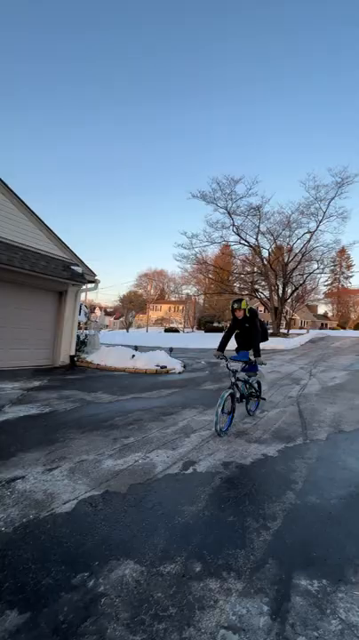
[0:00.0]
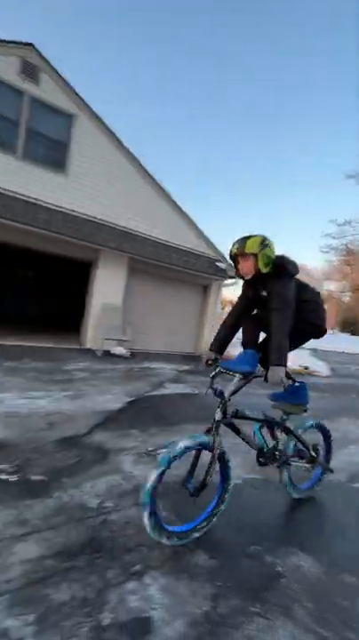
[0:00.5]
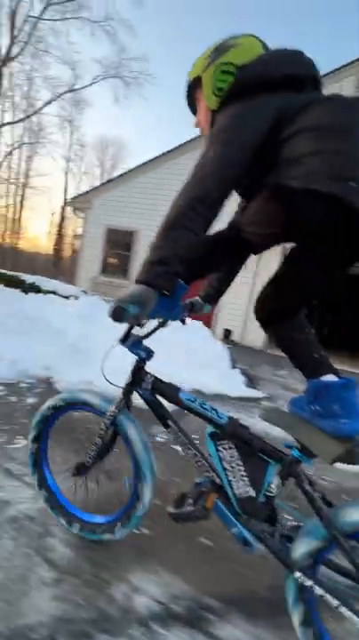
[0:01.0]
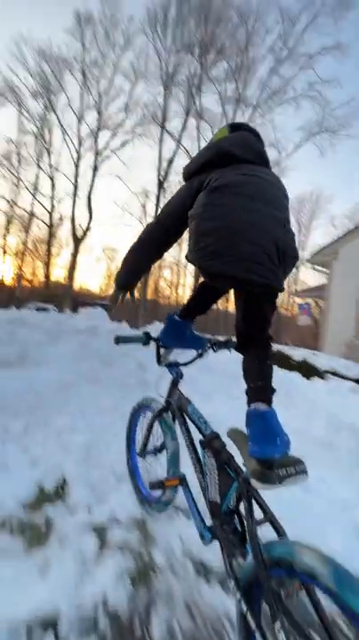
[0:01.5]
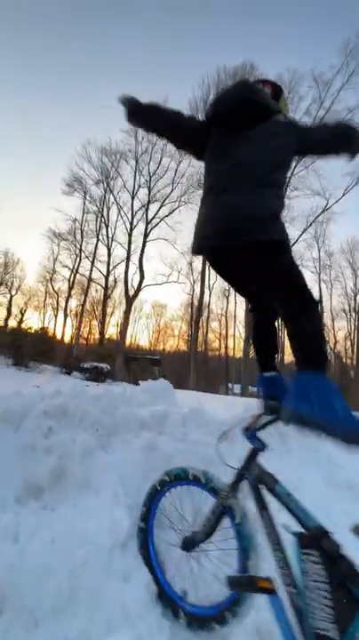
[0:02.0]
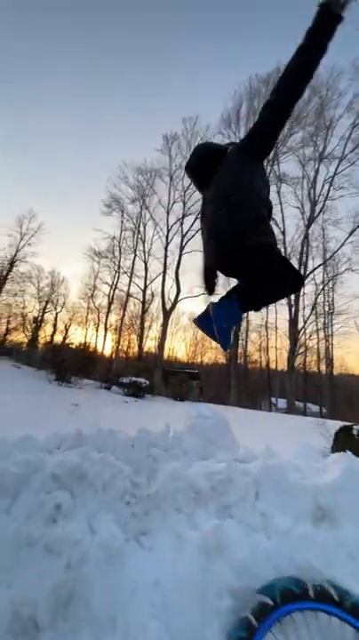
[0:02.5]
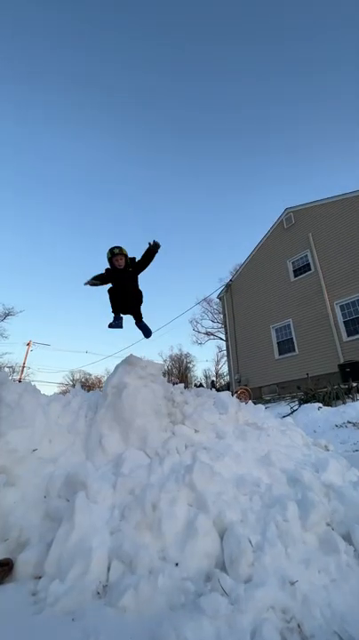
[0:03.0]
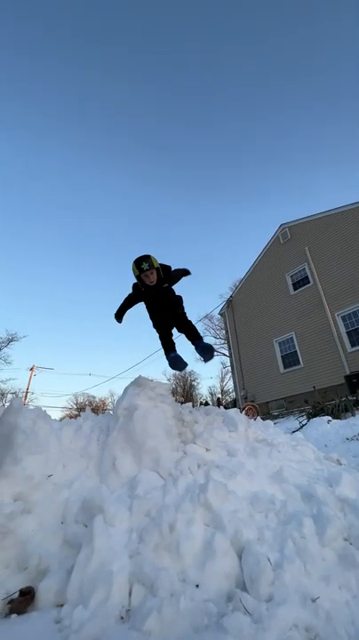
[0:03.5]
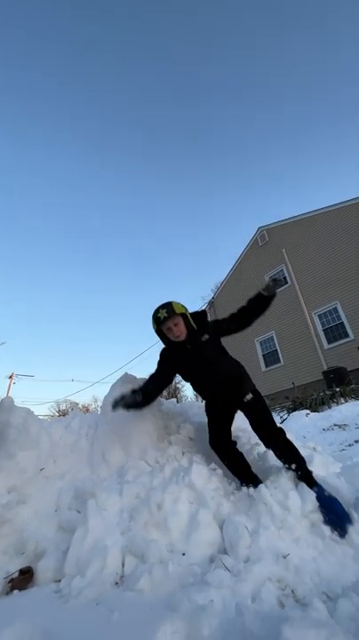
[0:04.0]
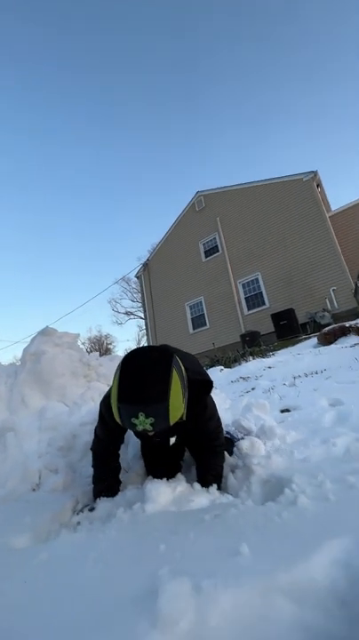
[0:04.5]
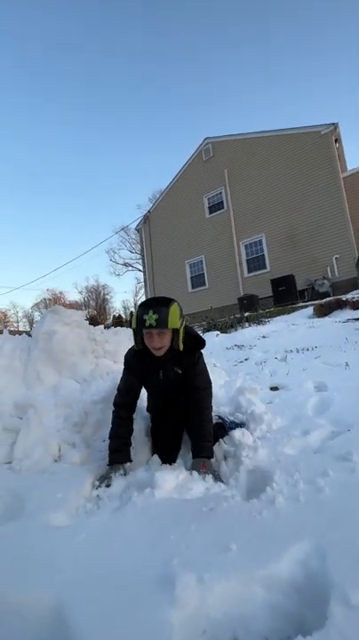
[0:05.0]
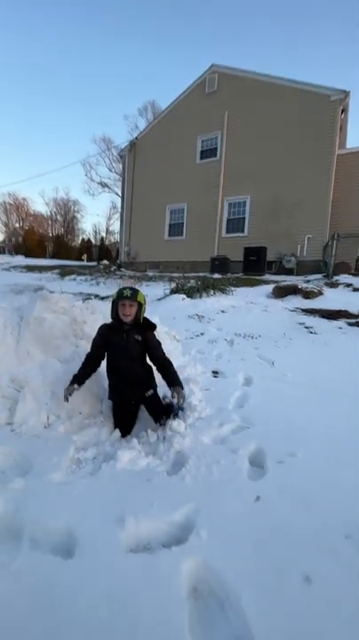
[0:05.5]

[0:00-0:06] A person rides a bike and then jumps over a big hill of shoveled snow. The bike starts on a blacktop; it is winter, and there is a tan house next to the rider that looks pretty big. There are little snow marks on the driveway. The rider's butt is not on the seat; instead, he has one foot on the seat and one foot on the handlebars, along with both hands on the handlebars. At the very last minute before the little built-up mixture of snow, he jumps off his bike. The video is in slow motion just as his body goes over the snow pile. He lands on his knees in the snow in front of the little snow pile. He is wearing black and a hat, his bike is blue, and his shoes are blue as well.